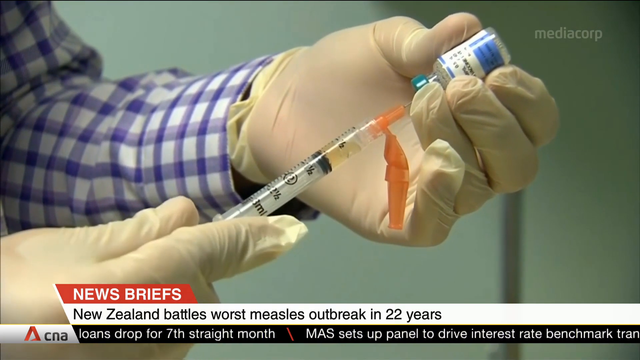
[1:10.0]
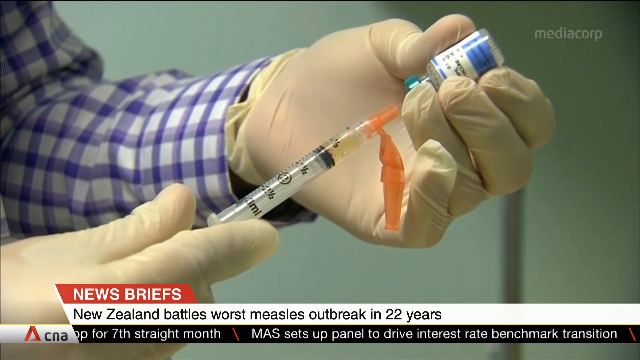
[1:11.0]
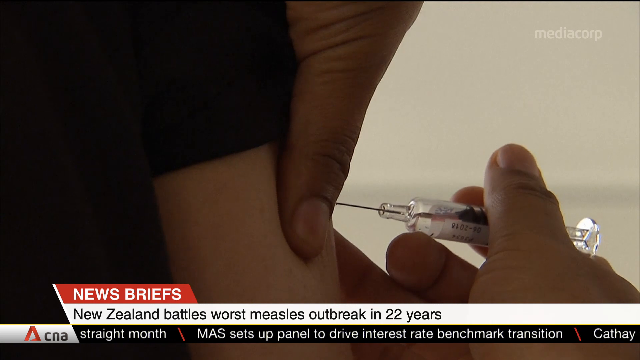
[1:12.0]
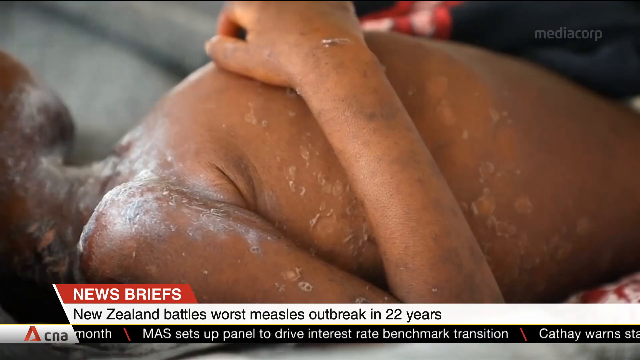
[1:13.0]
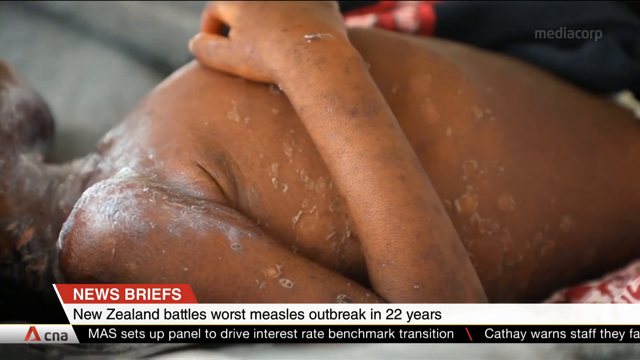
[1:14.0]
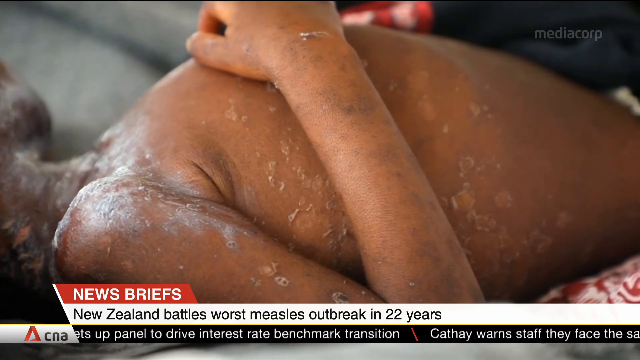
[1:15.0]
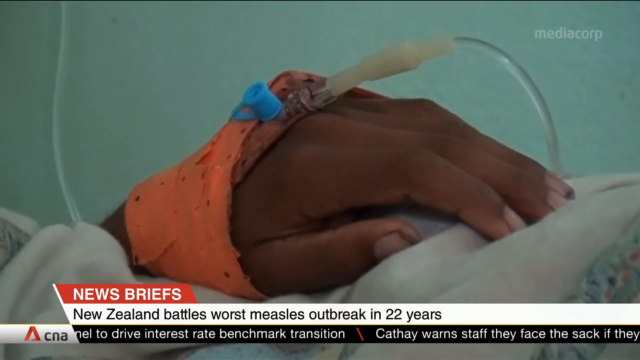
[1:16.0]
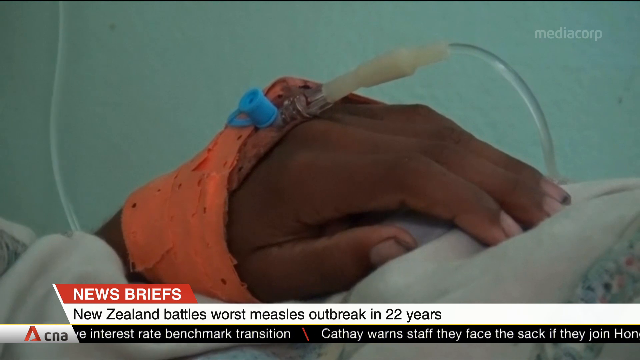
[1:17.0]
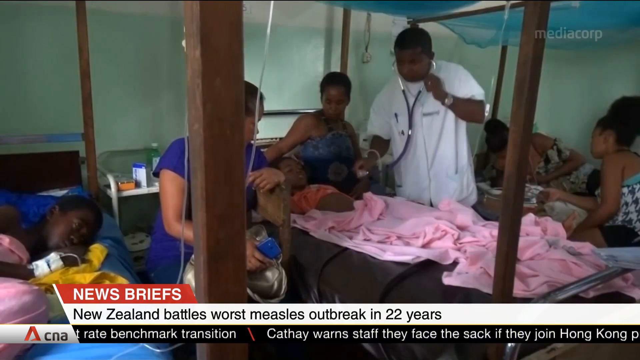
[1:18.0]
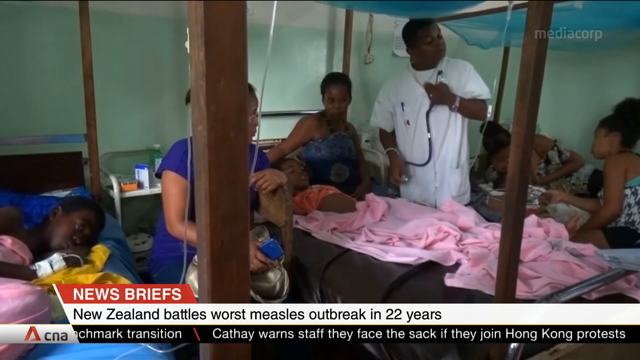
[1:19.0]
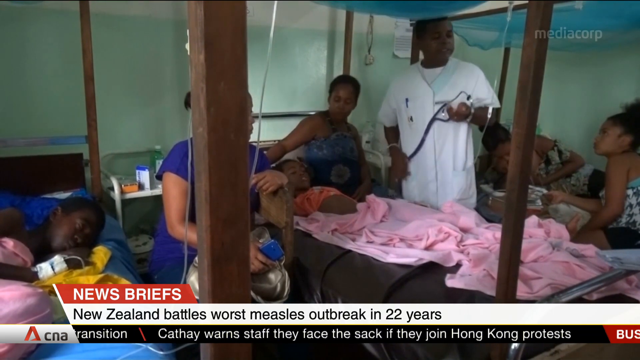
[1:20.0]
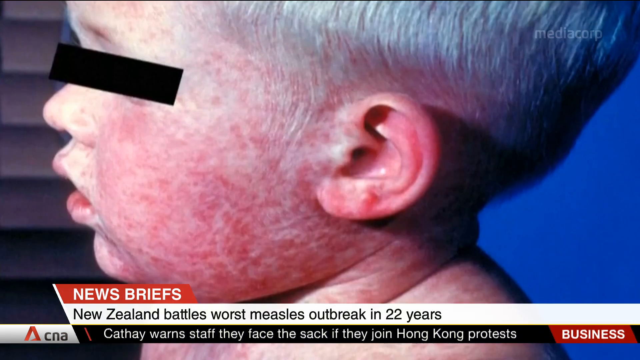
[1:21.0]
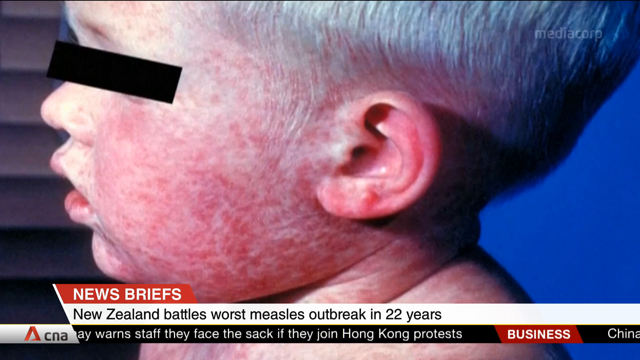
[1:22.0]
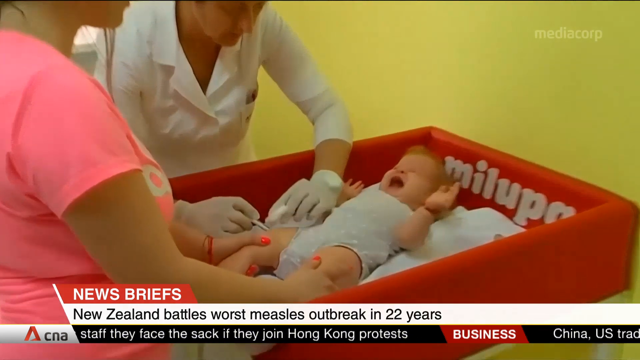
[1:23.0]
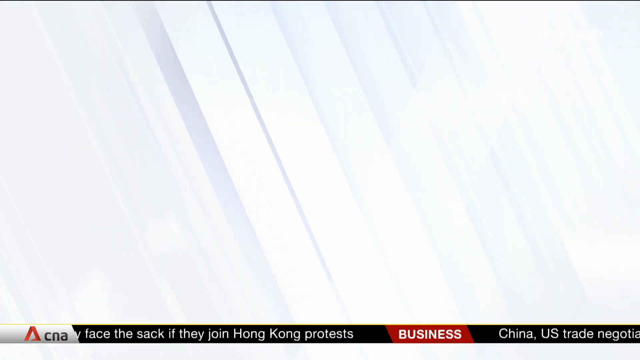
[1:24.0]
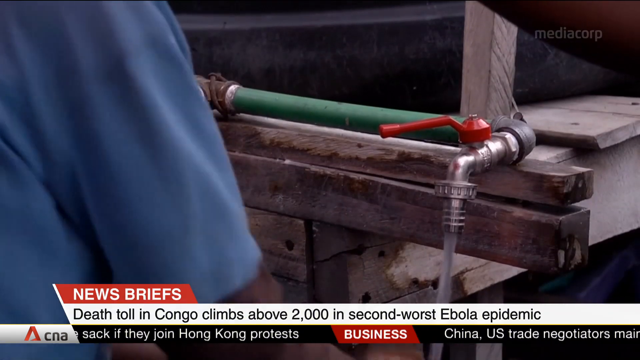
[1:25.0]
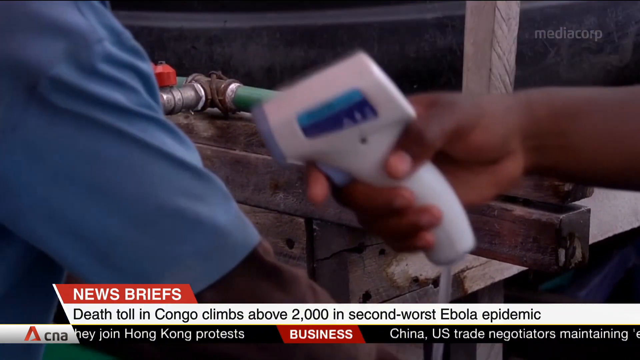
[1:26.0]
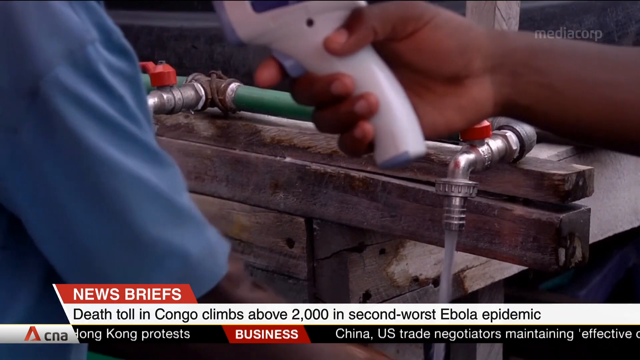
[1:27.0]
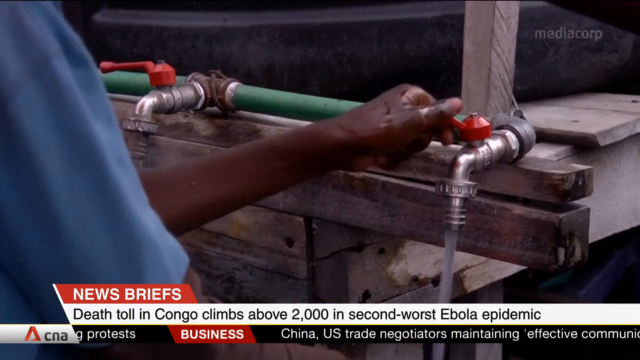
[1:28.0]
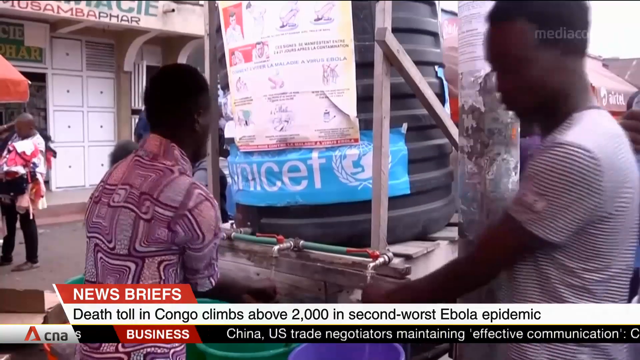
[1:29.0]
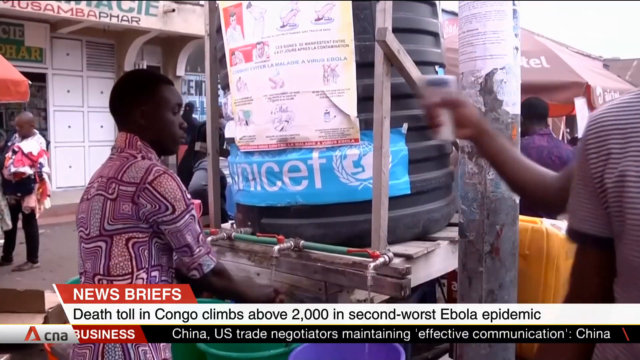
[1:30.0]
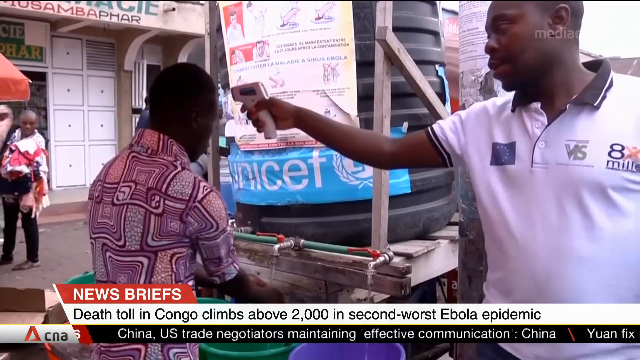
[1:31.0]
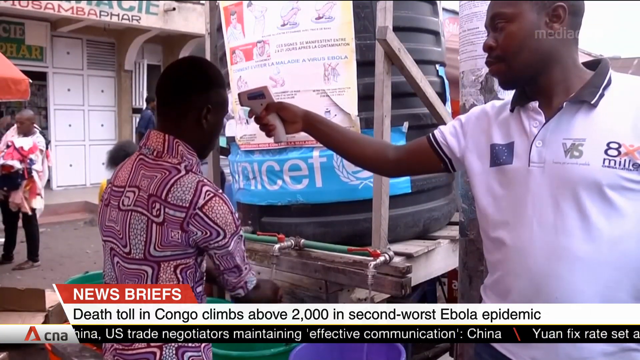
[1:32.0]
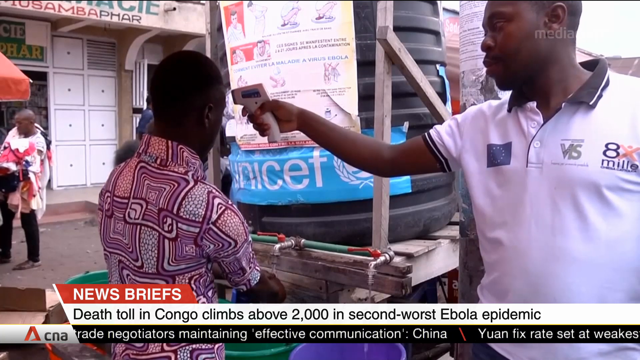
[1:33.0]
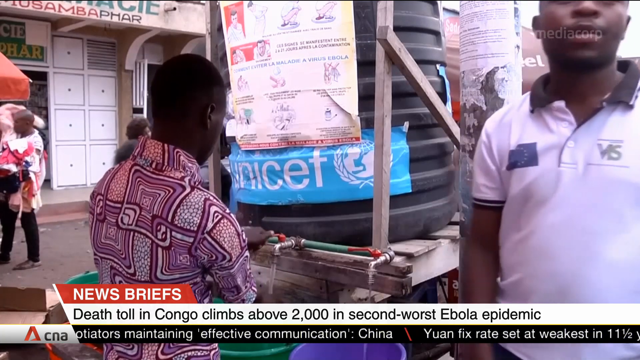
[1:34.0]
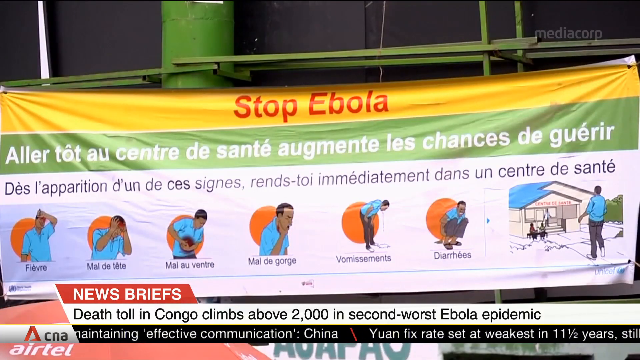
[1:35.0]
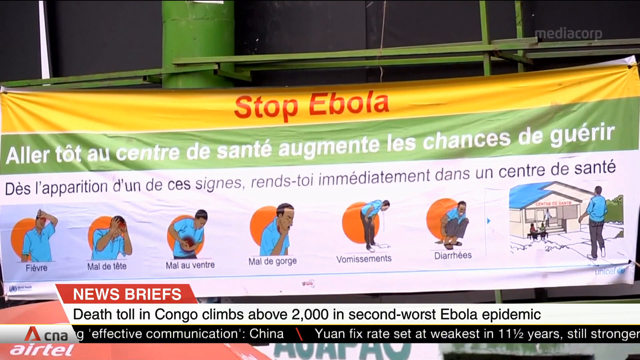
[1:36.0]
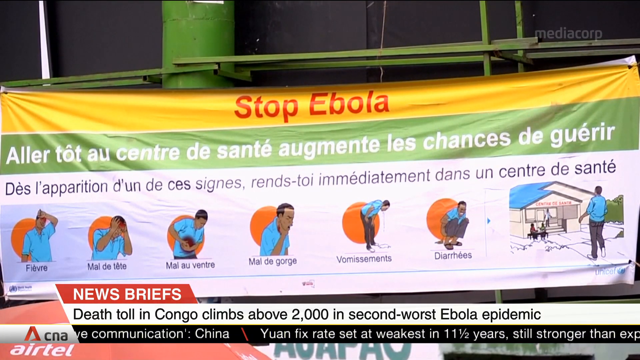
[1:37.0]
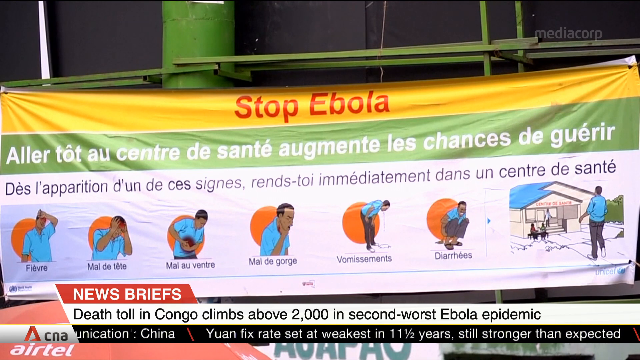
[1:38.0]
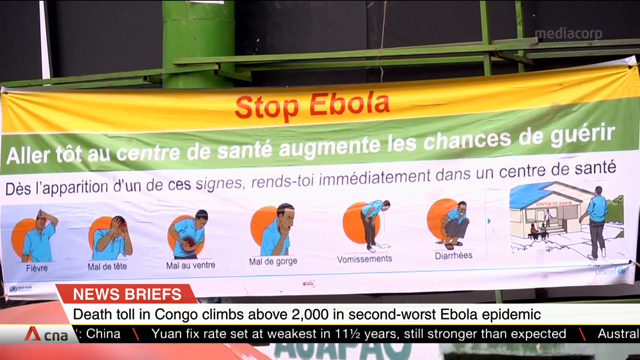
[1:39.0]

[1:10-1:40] More syringes are shown, and now people are being injected with them. Most of the people appear to be dark-skinned, possibly of African descent or in an African country. Doctors take people's pulses and inject them with the vaccine. A boy whose eyes are censored out has a face that looks very red, and a baby cries briefly. The video then moves to another story with the text "news brief death toll in Congo climbs above 2,000 and second worst Ebola epidemic." A man takes another man's temperature with a temperature gun. A big banner says "stop Ebola" and appears to show a visual demonstration of various symptoms of Ebola, such as diarrhea, vomiting, cough, stomach pains, and headaches. A whole hospital for caring for people who have the disease is then shown.